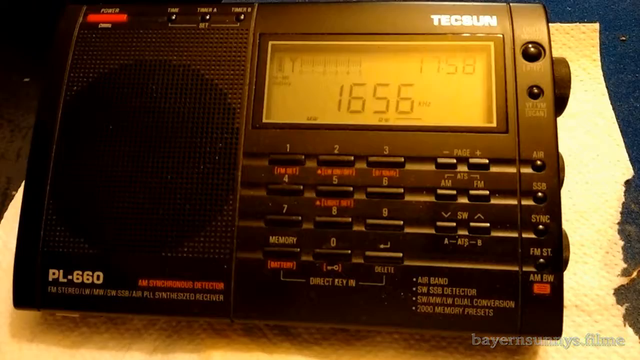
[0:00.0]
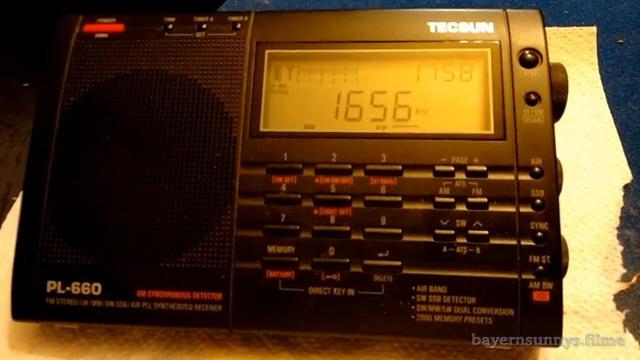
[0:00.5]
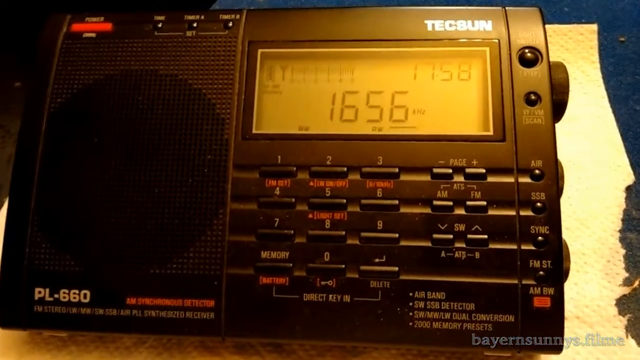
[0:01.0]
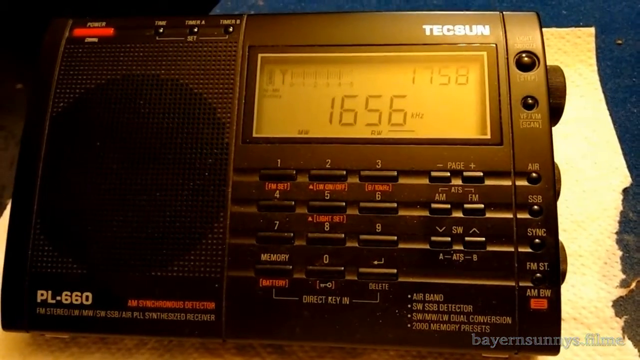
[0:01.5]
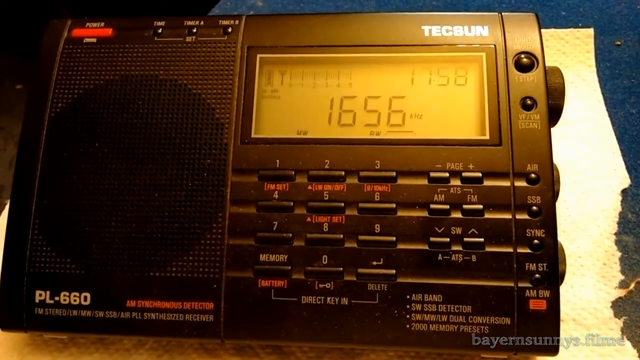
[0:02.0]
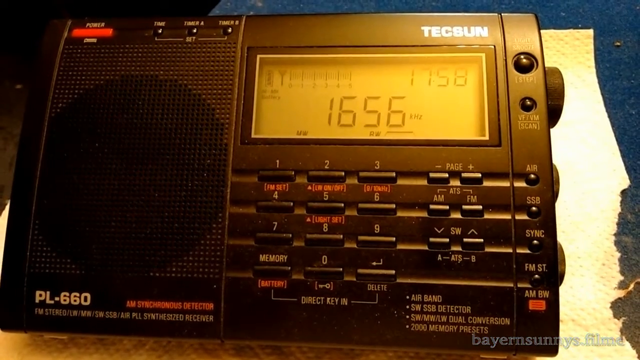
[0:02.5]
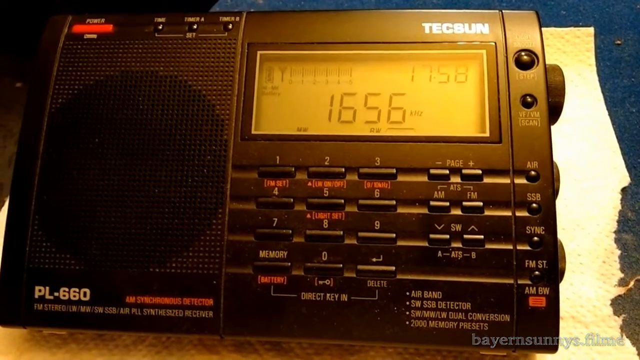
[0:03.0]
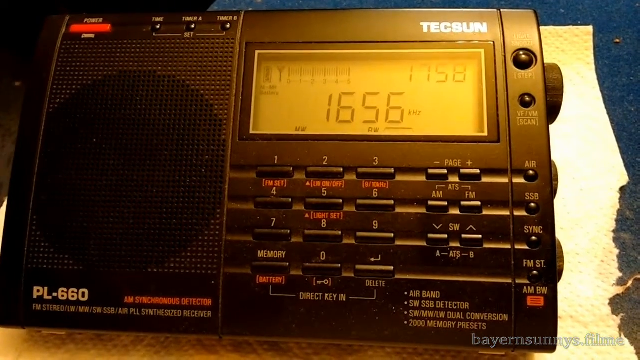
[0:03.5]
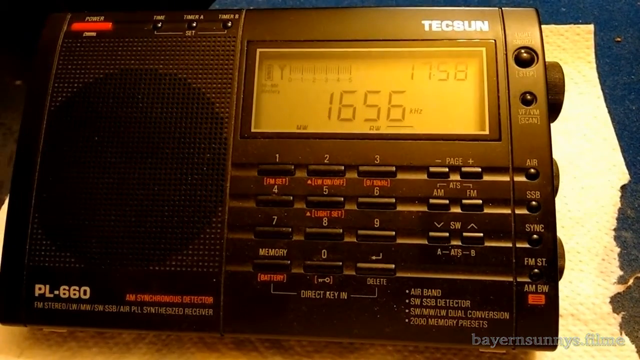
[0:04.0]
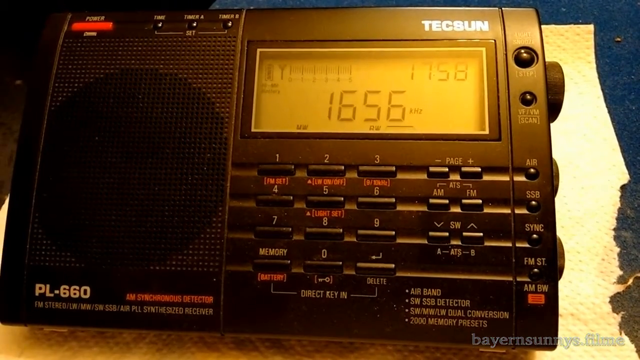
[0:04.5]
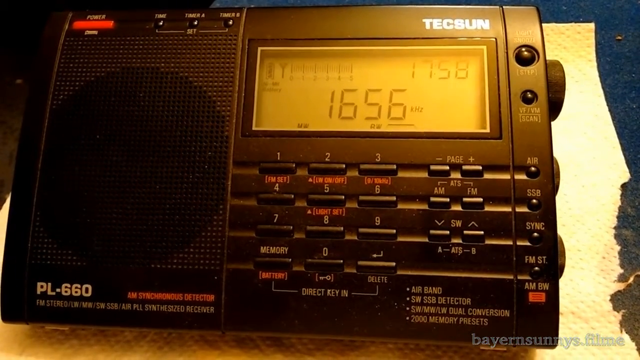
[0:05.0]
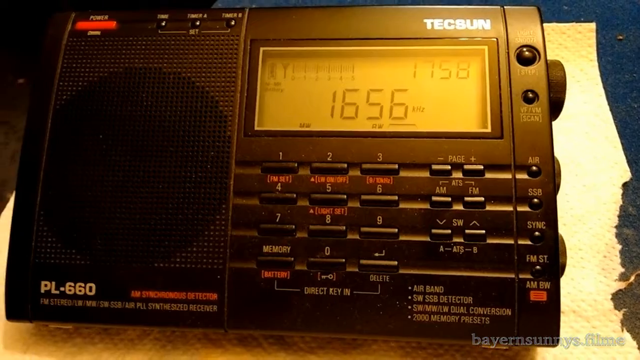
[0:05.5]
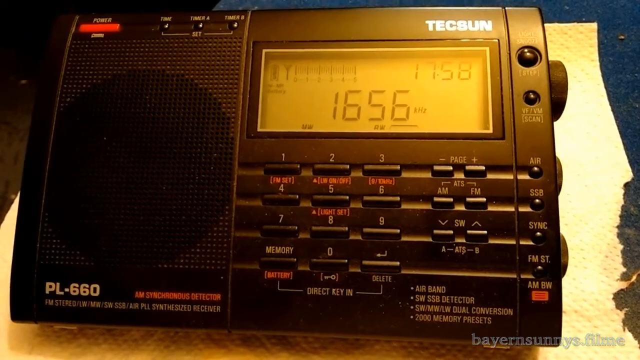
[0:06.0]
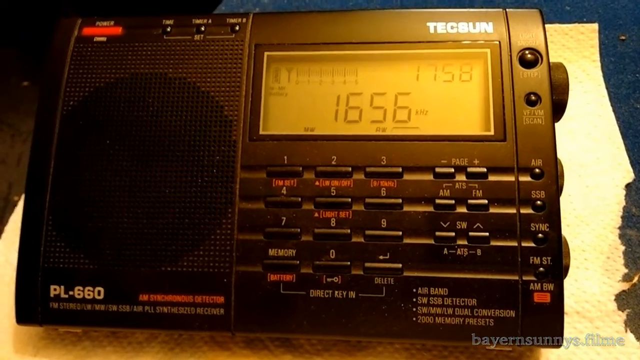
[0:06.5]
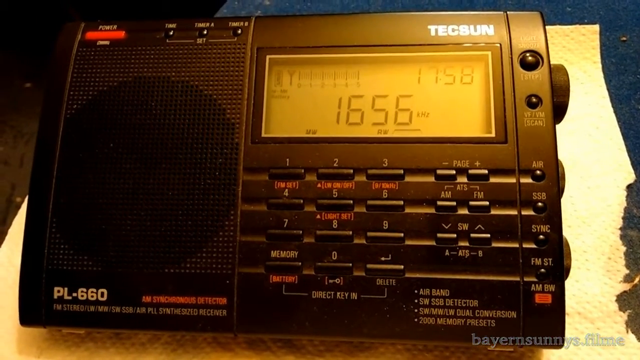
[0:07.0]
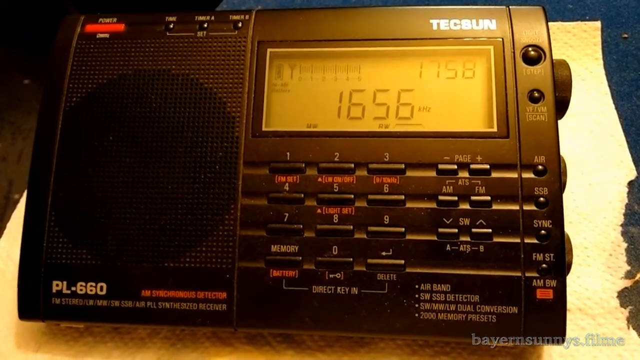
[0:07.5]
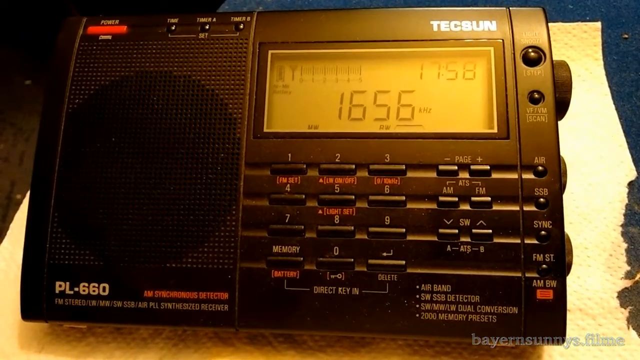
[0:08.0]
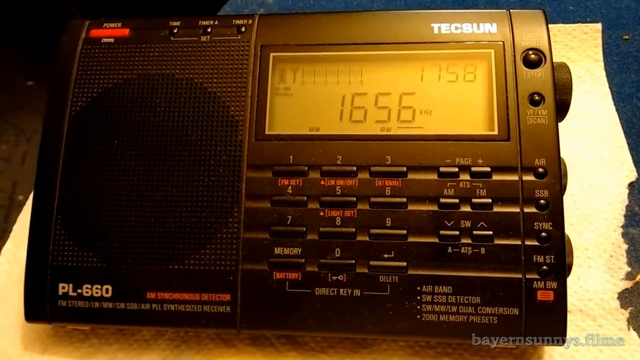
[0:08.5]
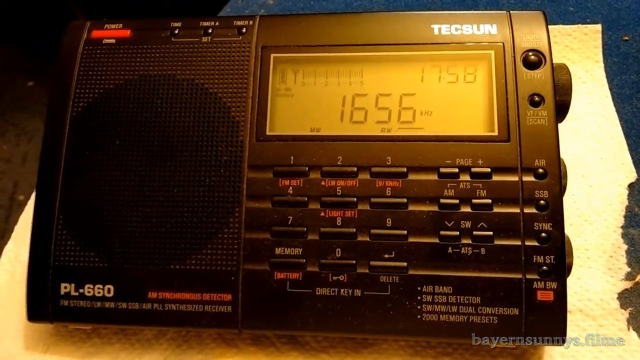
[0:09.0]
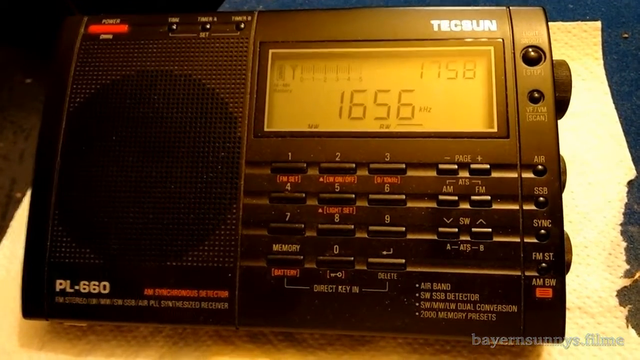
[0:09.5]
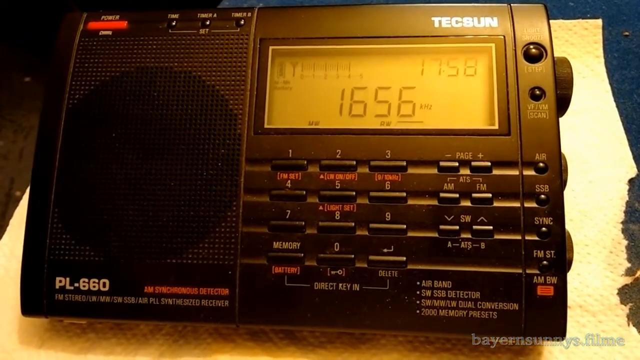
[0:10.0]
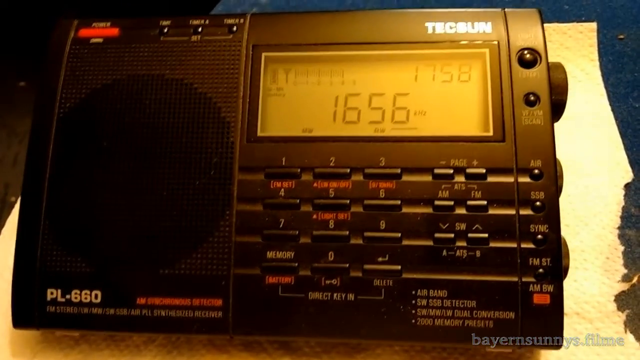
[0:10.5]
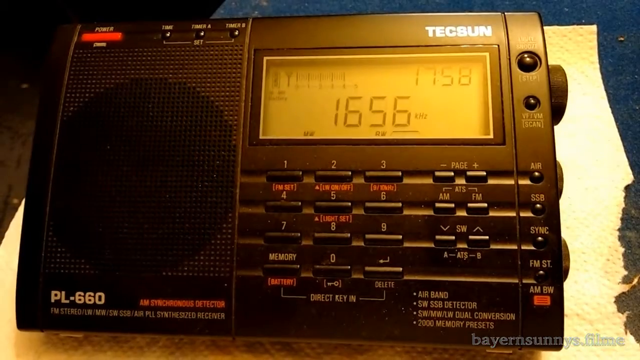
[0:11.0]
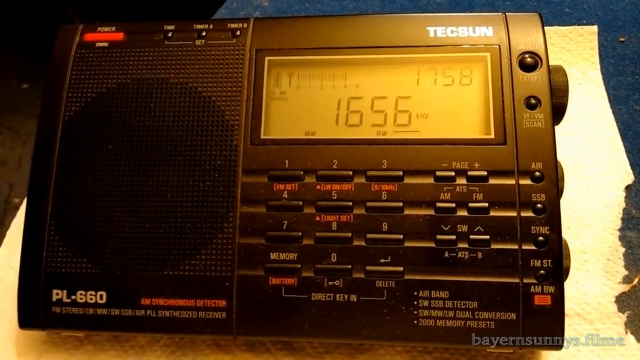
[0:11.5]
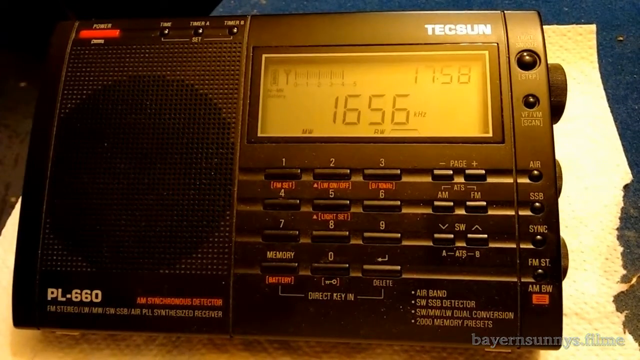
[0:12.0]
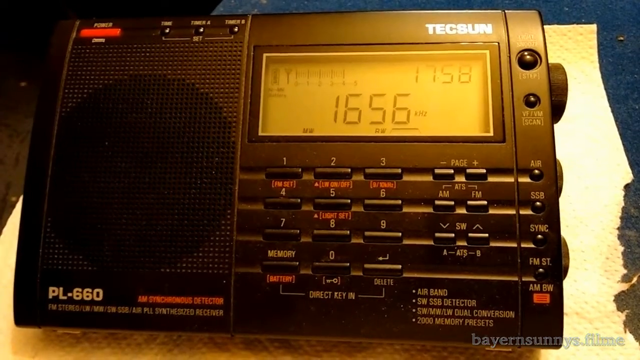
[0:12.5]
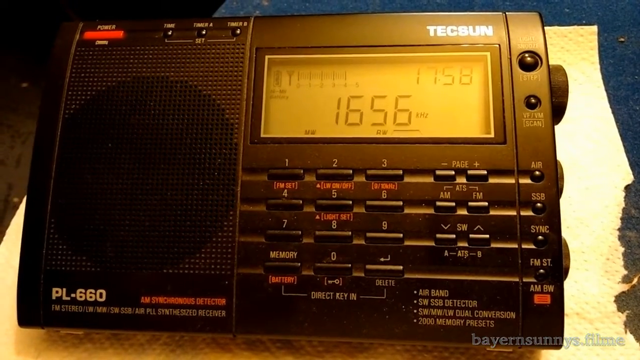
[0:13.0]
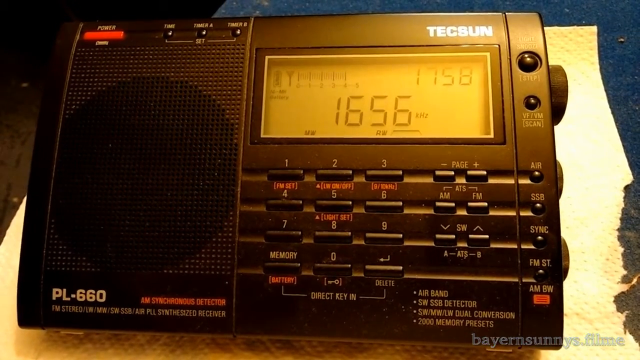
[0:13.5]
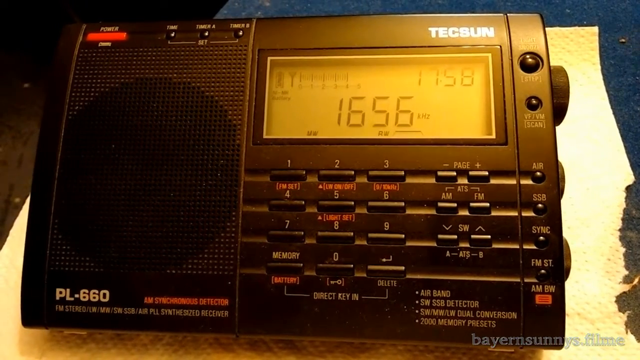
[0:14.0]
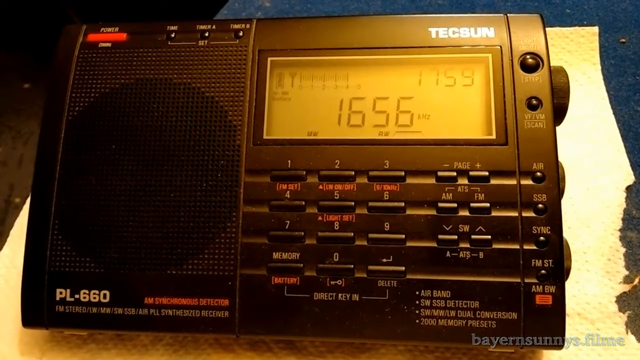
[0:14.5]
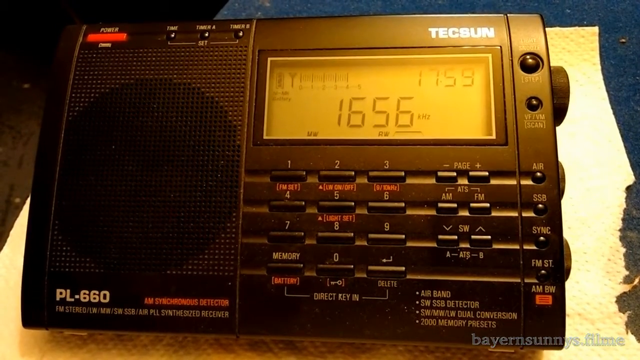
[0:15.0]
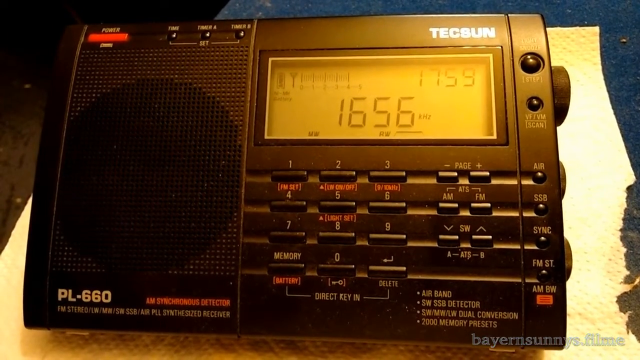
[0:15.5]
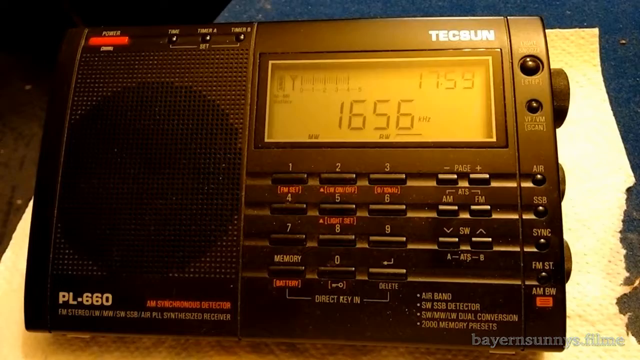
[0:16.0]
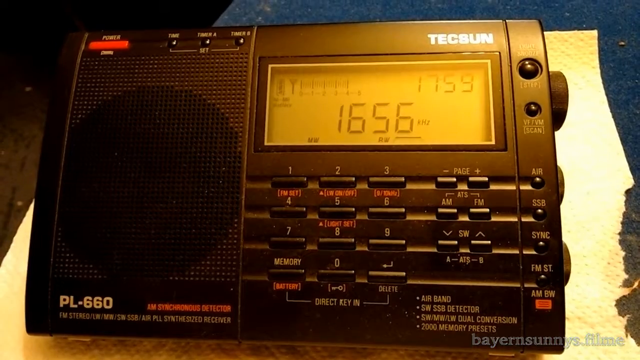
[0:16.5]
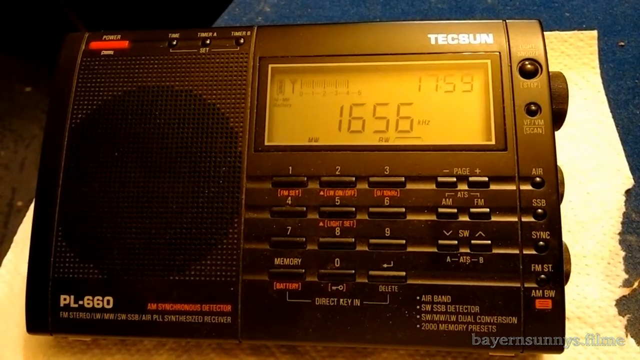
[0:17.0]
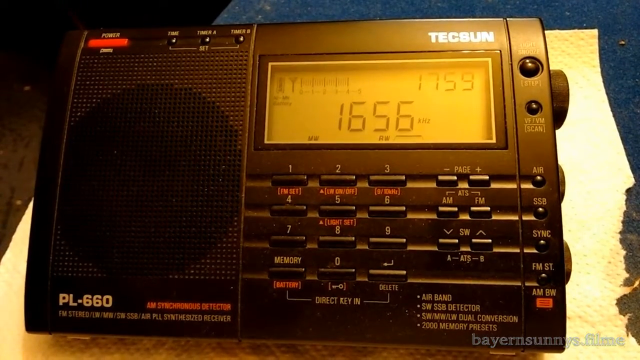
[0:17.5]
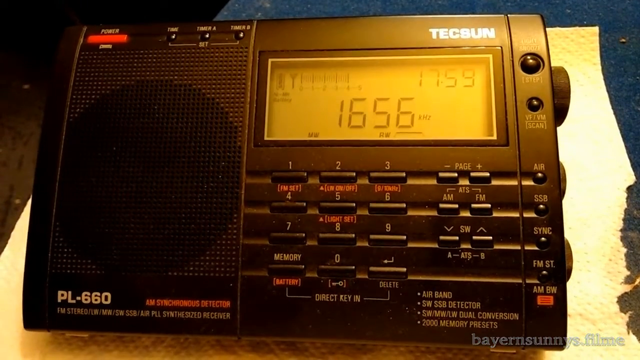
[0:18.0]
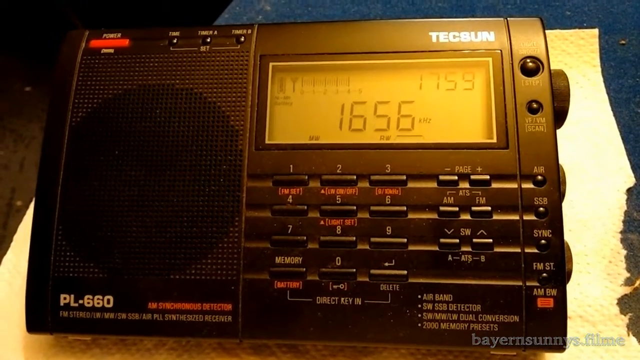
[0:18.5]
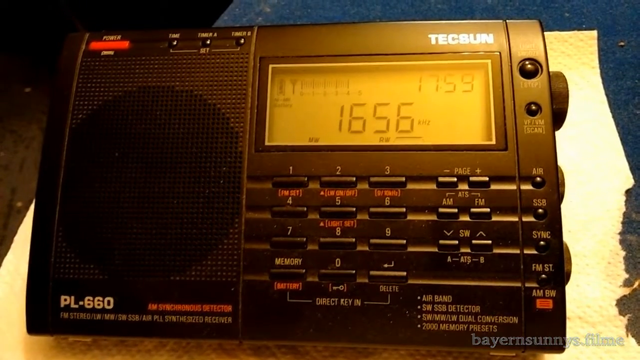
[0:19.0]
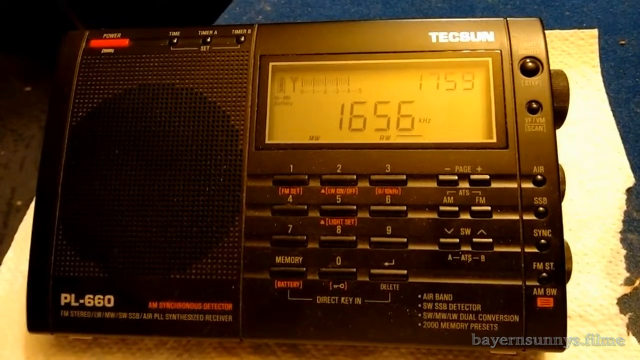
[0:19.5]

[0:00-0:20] A device appears, apparently a speaker of some kind; it kind of looks like a phone but is not one. Text on it reads "AM Synchronous Detector," and the brand is Texan. A set of small number buttons runs from 1 through 0, along with a memory function, a backspace function, small plus and minus signs for the page, and AM, FM, SW, up and down buttons. Feature text on the device reads "air band, SW SSB detector, SW MW LW dual conversion, 2000 memory presets," and the model is shown as PL660. The screen displays "1656HZ," with additional numbers in the top right corner reading "1758." The camera stays on that area. A small red power button is in the top left corner, along with a time button, a timer A button and a timer B button.